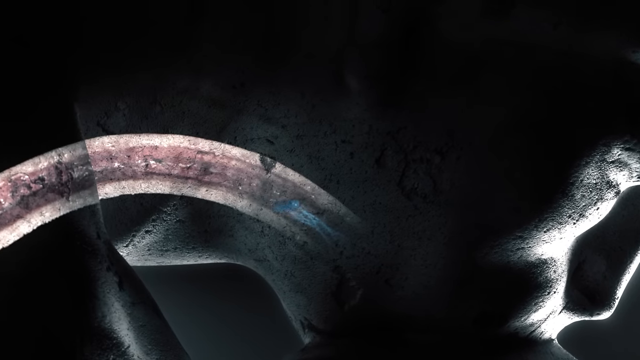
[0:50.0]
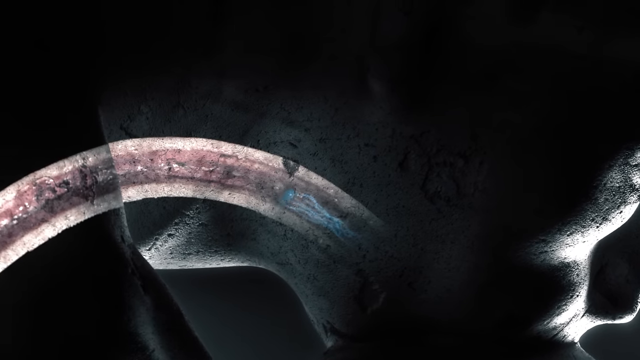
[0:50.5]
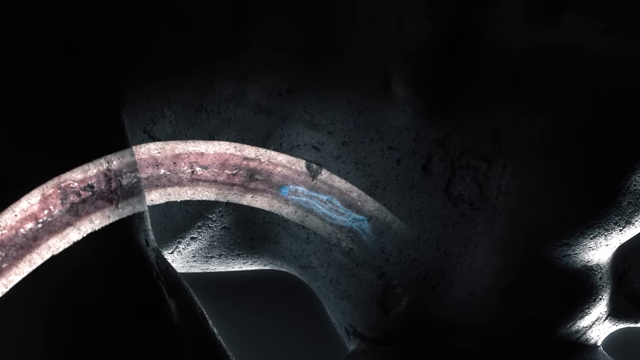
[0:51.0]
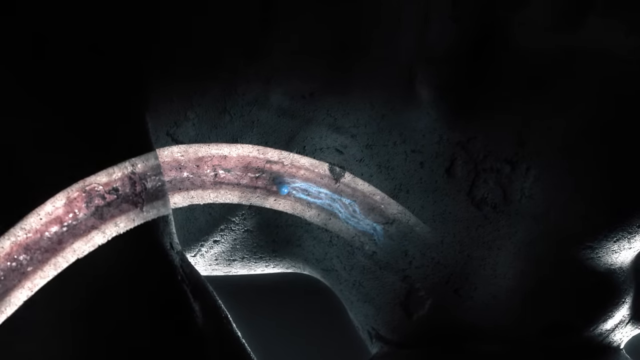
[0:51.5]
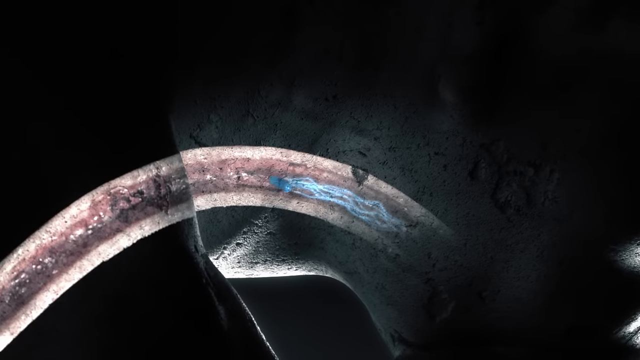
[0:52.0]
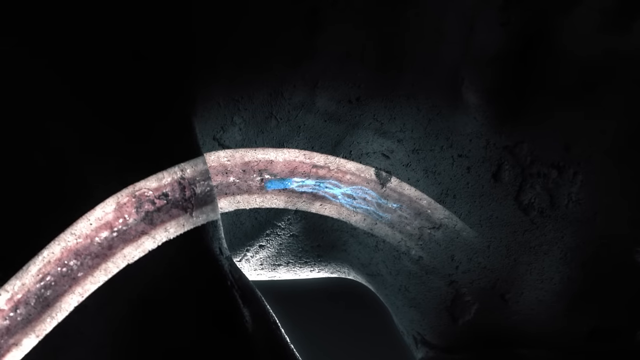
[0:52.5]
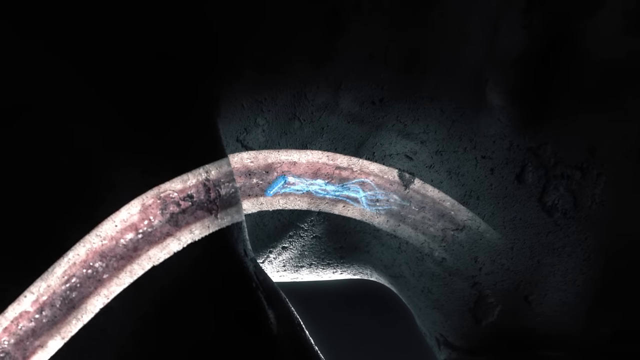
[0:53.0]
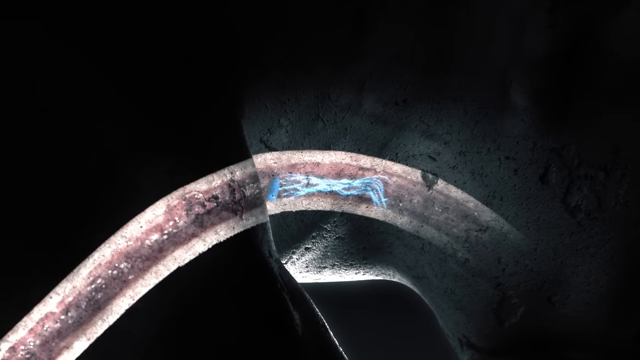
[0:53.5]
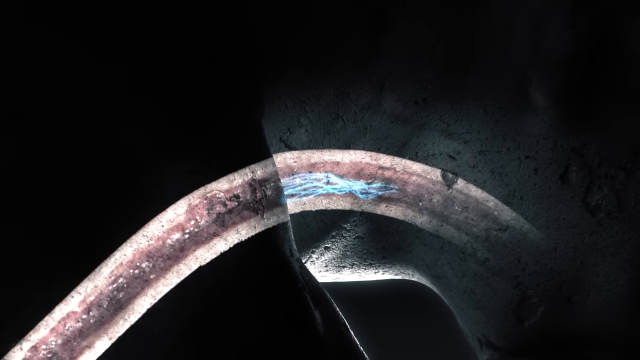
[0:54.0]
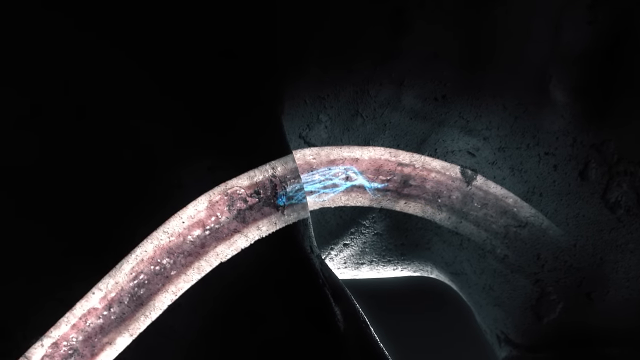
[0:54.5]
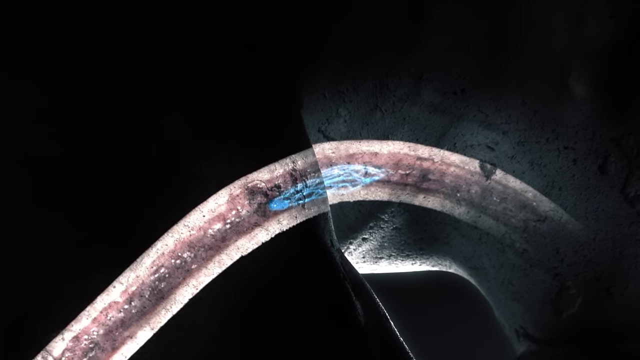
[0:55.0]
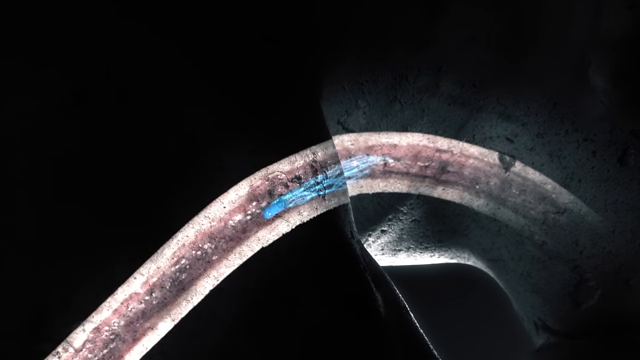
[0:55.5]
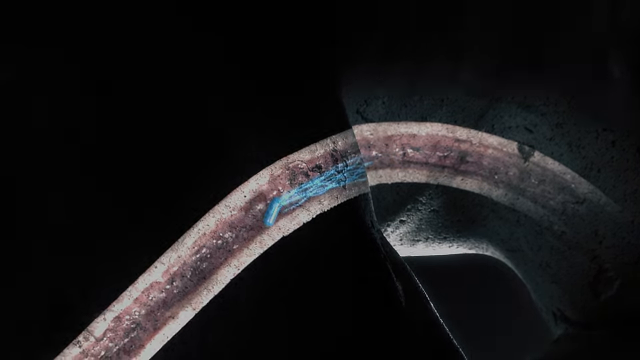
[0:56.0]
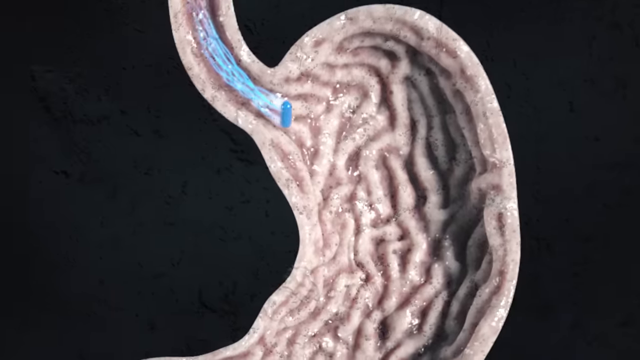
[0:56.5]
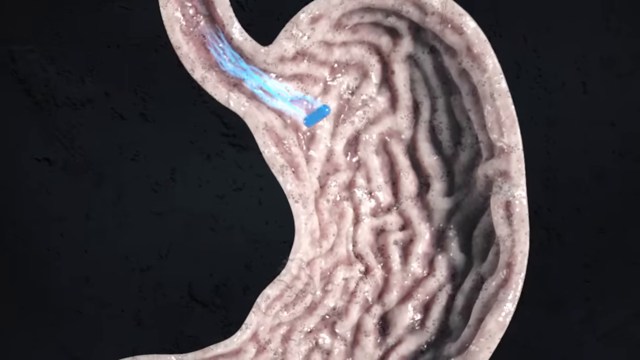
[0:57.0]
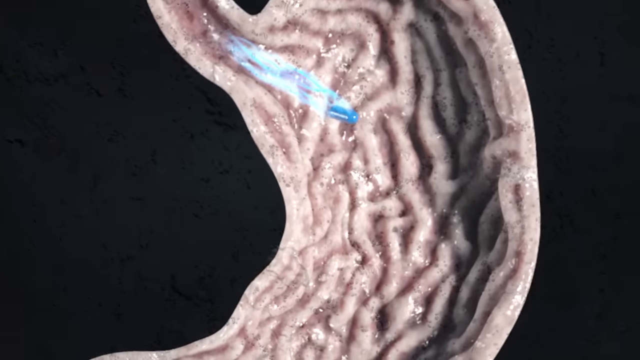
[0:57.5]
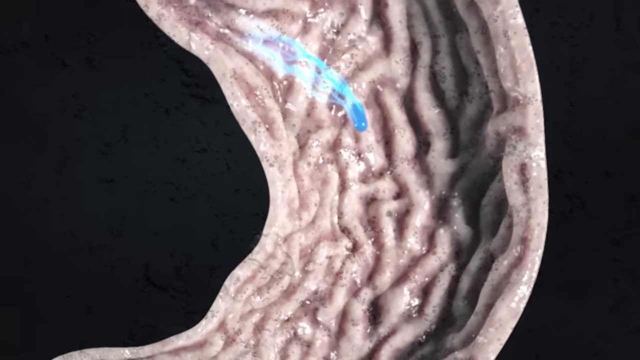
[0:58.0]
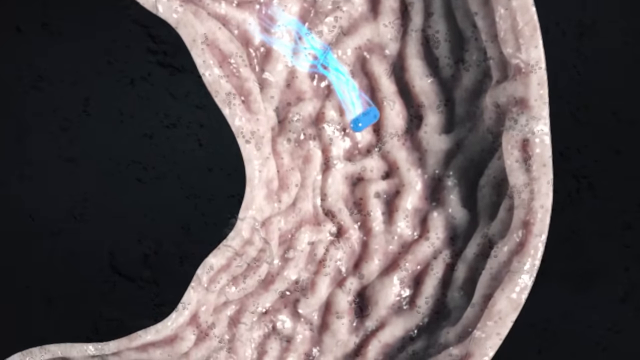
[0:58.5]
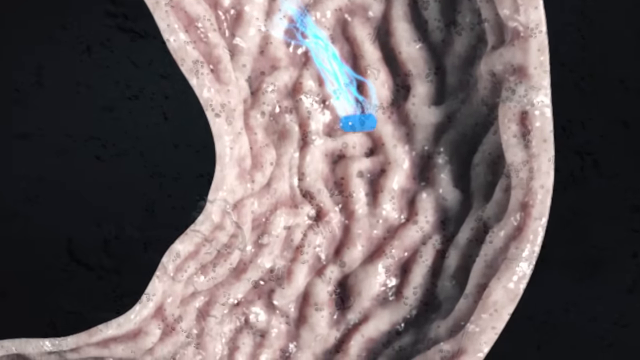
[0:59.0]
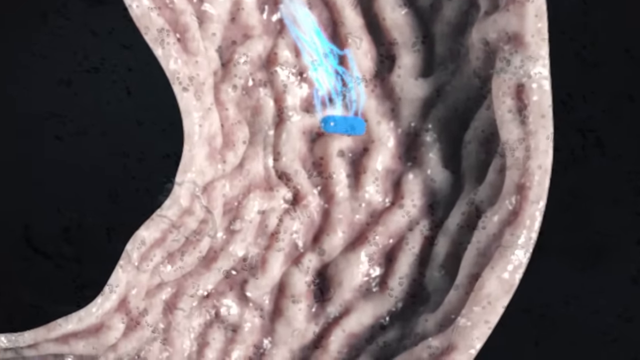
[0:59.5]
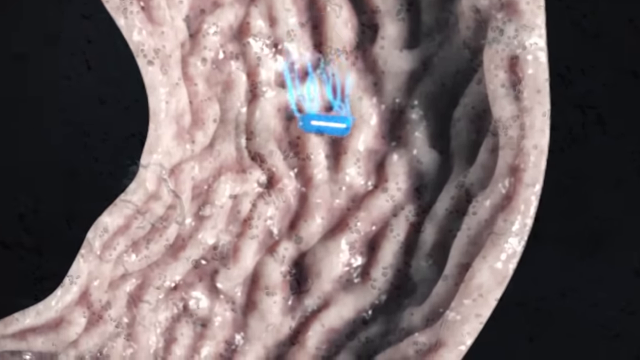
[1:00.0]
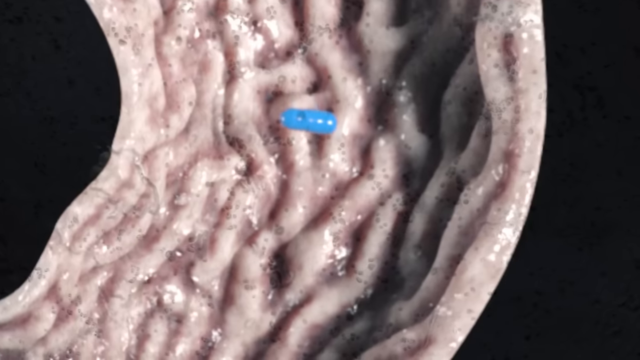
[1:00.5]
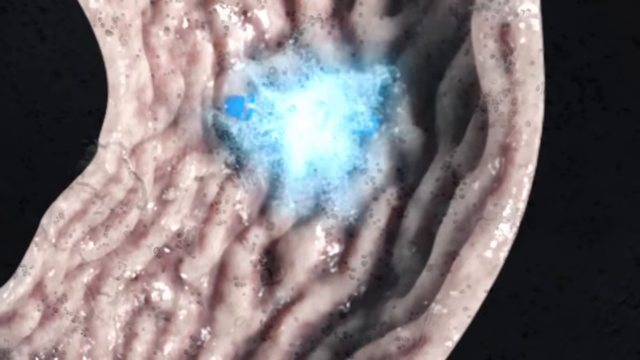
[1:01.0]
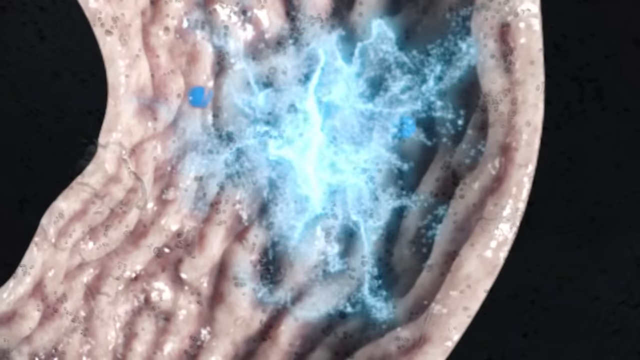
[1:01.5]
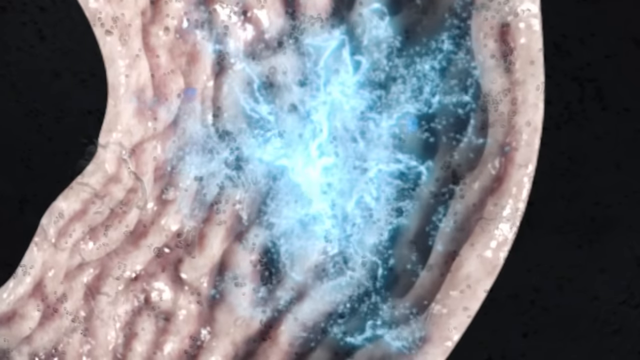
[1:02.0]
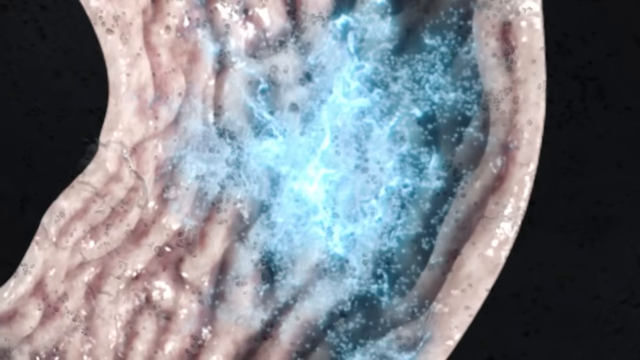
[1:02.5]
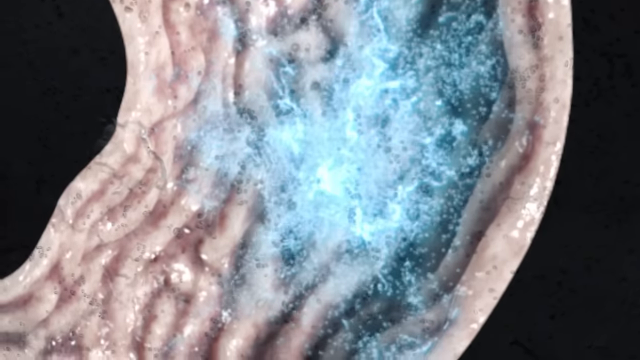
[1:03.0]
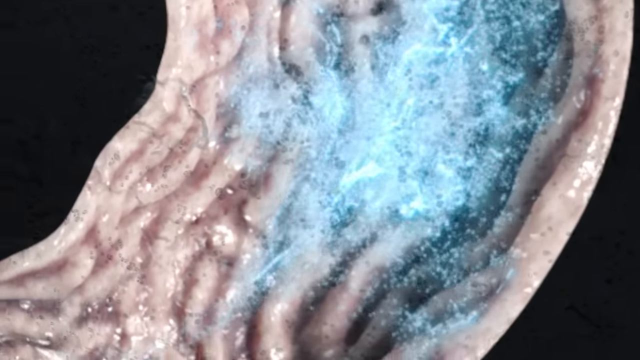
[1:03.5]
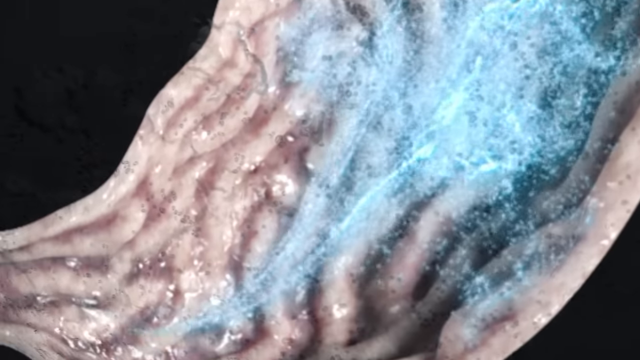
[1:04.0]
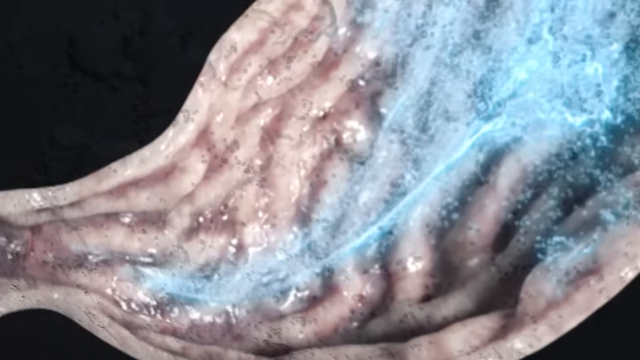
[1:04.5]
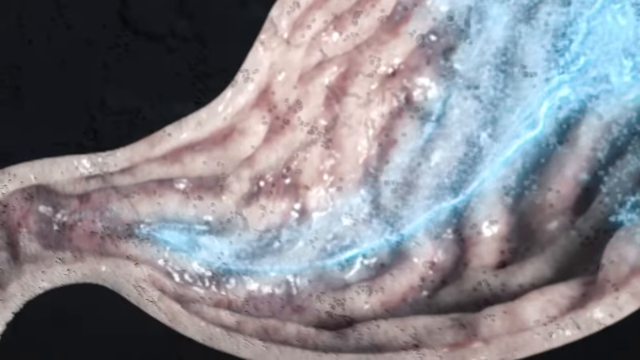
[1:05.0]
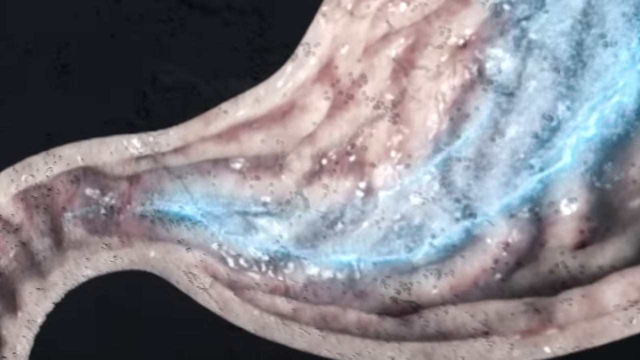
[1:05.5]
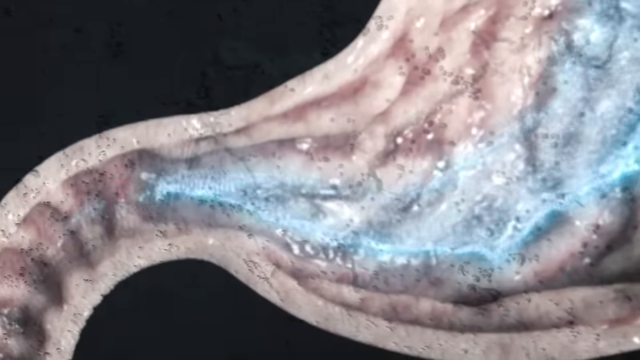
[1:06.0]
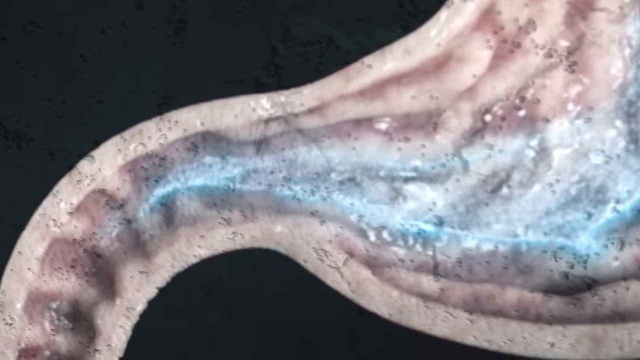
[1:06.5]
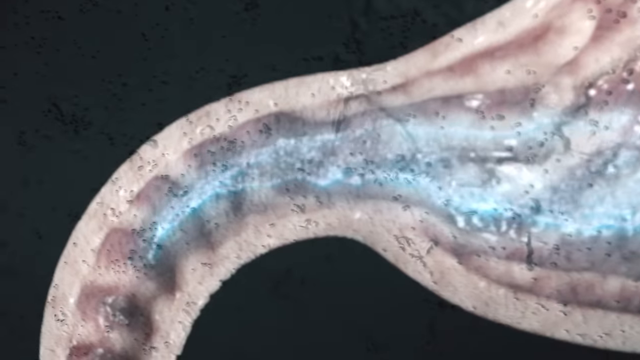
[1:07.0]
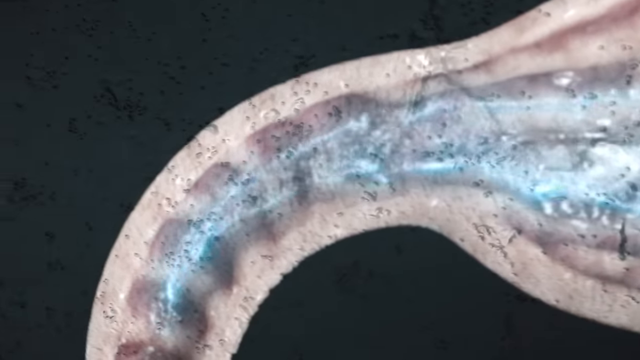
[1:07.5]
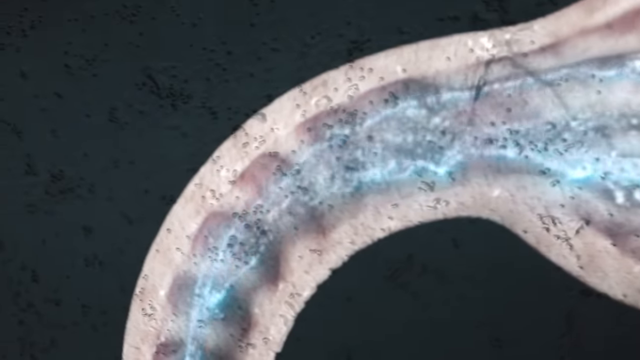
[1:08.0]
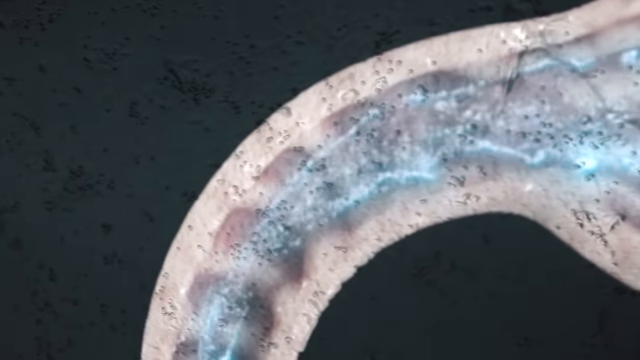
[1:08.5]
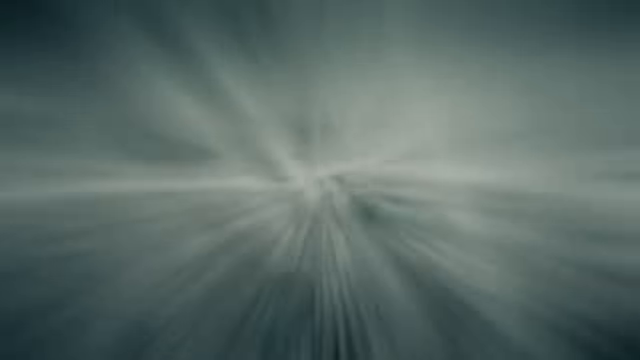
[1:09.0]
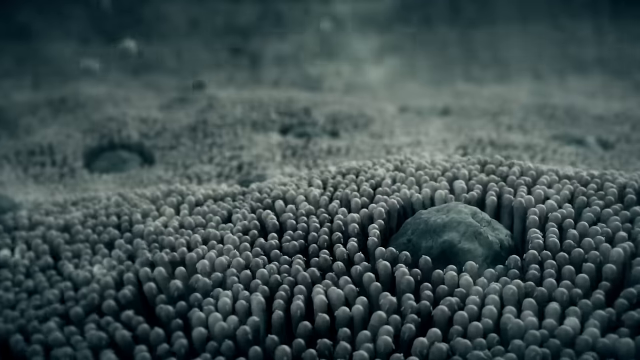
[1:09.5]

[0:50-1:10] An image appears to show a scientific process. A pink and tan esophagus-style shape curves at an angle through the background image of a statue. A blue oval-shaped pill, with streaks of blue color trailing behind it, travels down the throat into a stomach area. The stomach area has a very gelatinous look, a ribbed texture, and an off-white color. The blue pill drops in, and the capsule explodes into blue light and tiny particulates that move throughout the stomach area and then start to go down a separate tube or valve toward another region of the body as the camera shifts away.